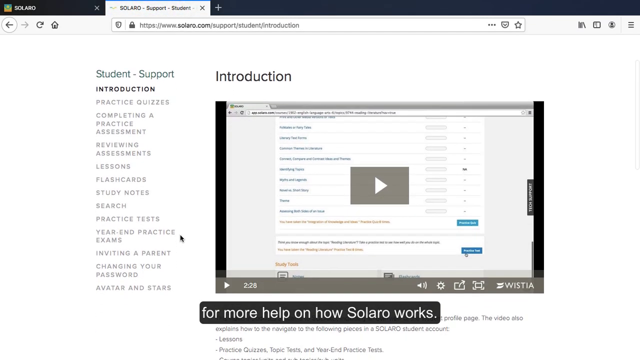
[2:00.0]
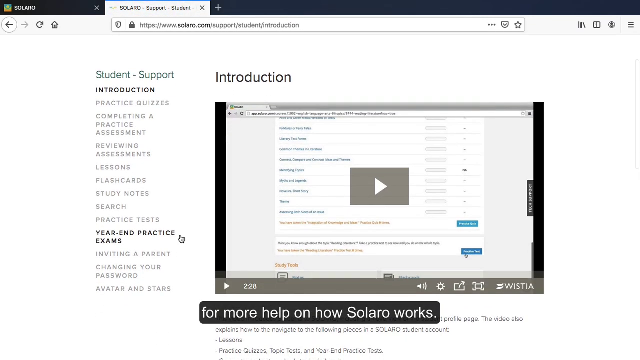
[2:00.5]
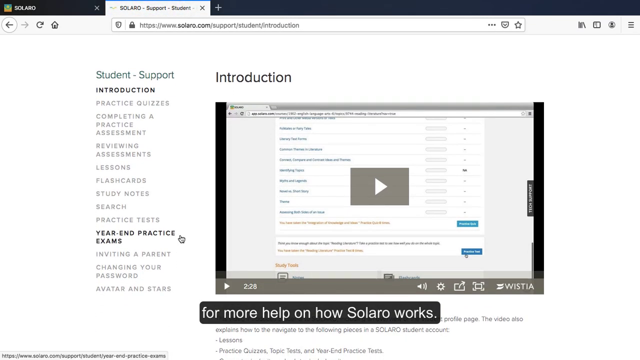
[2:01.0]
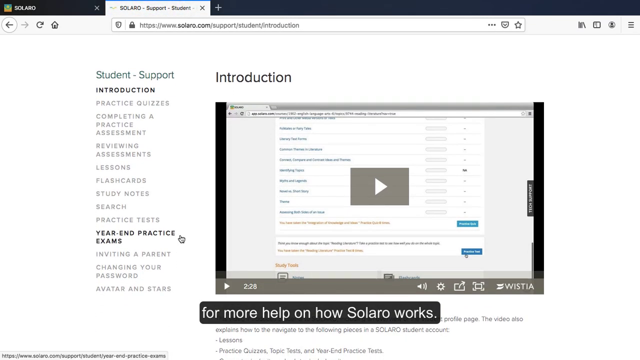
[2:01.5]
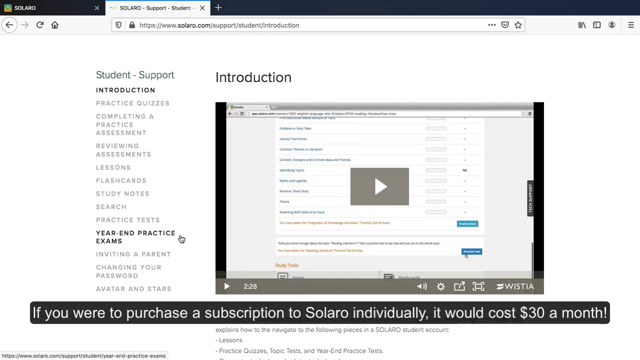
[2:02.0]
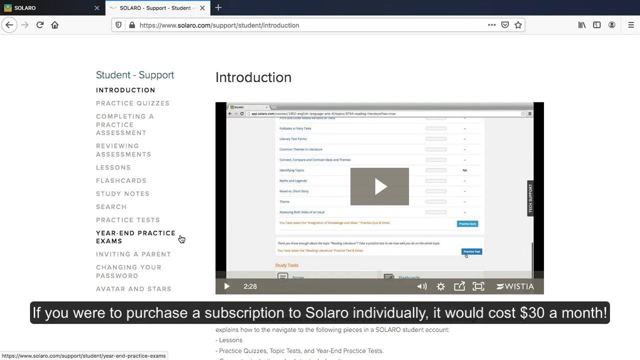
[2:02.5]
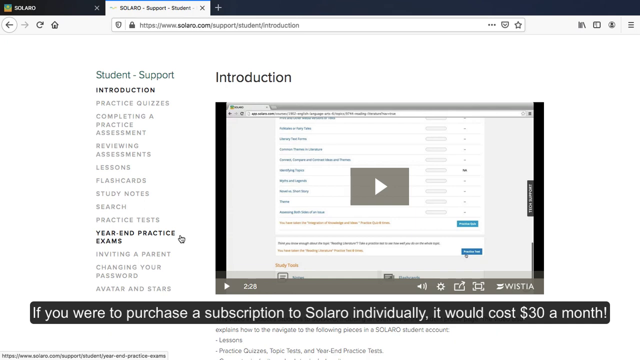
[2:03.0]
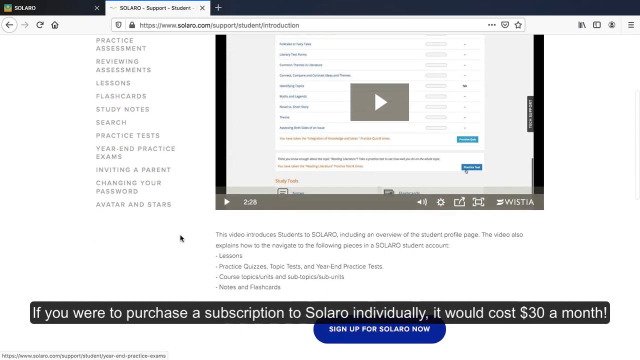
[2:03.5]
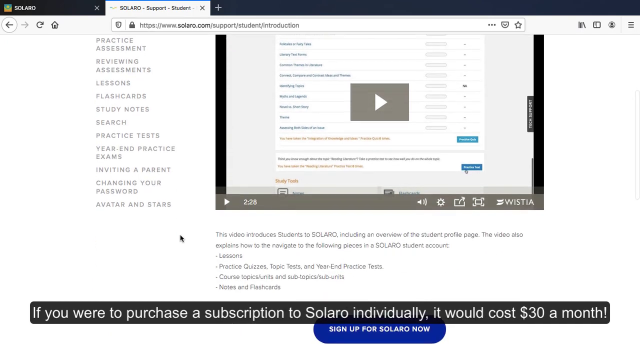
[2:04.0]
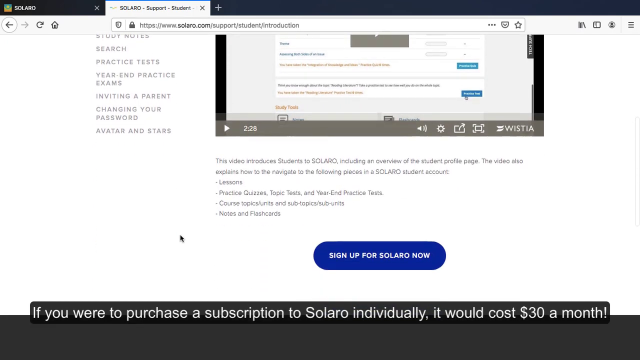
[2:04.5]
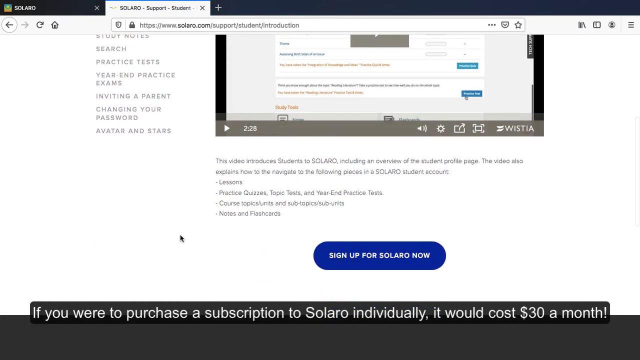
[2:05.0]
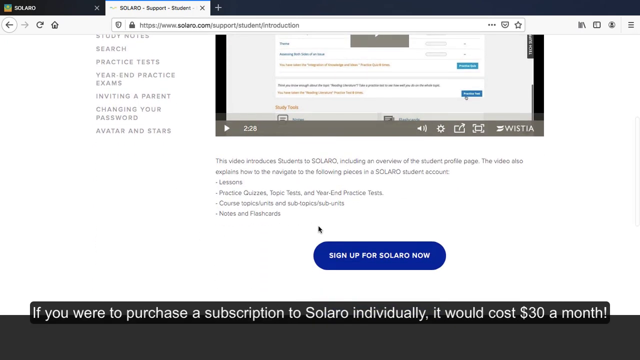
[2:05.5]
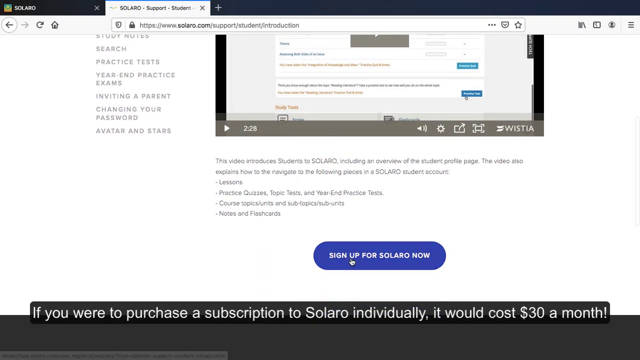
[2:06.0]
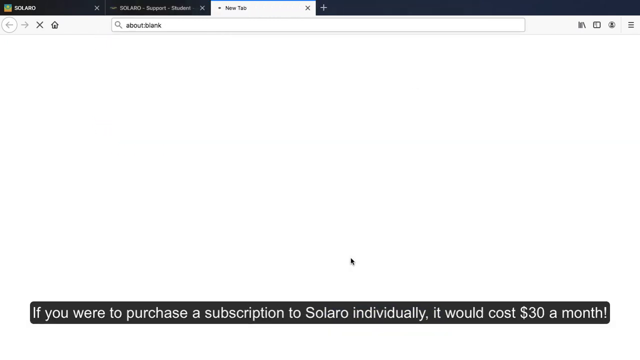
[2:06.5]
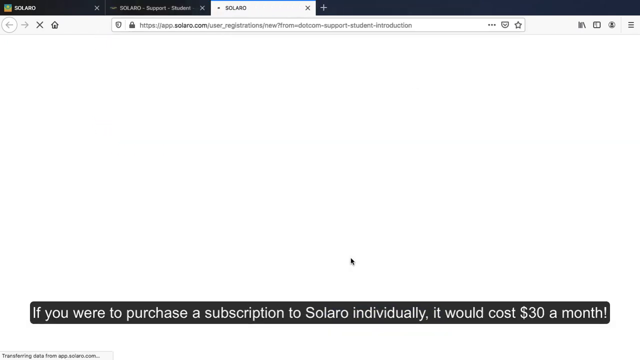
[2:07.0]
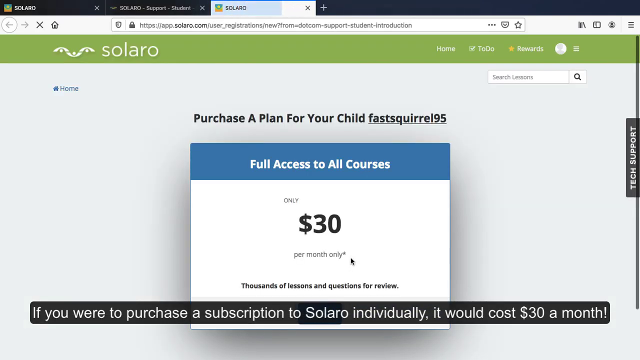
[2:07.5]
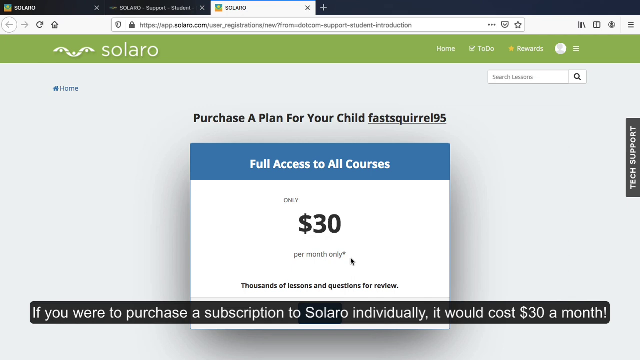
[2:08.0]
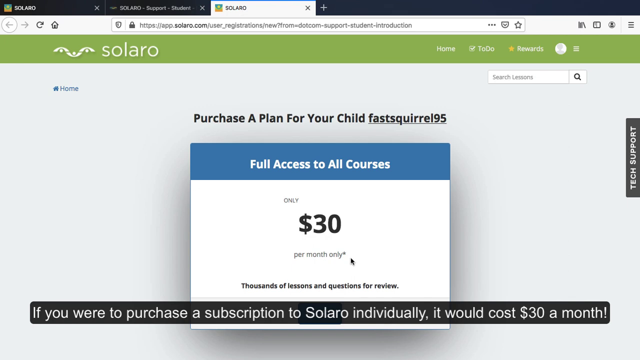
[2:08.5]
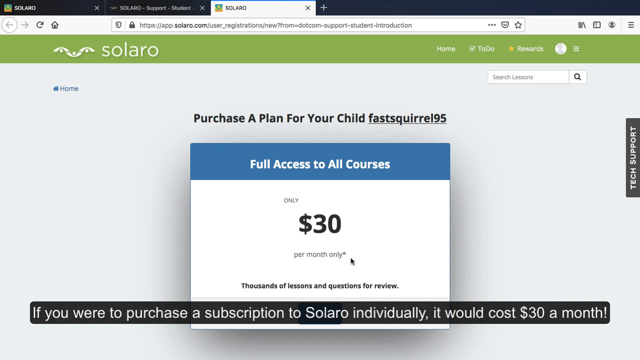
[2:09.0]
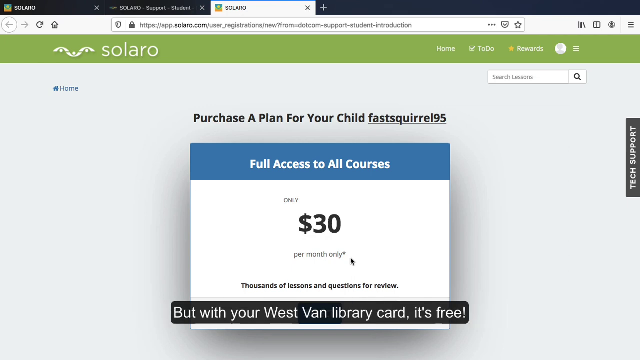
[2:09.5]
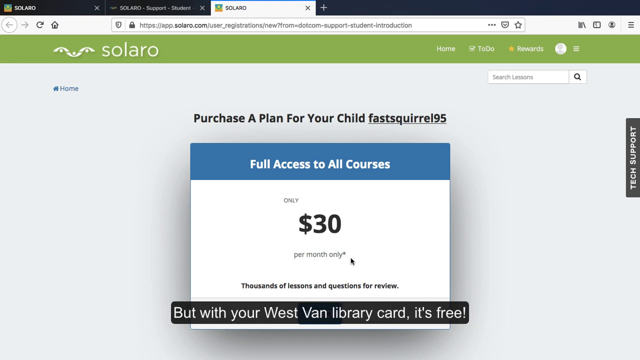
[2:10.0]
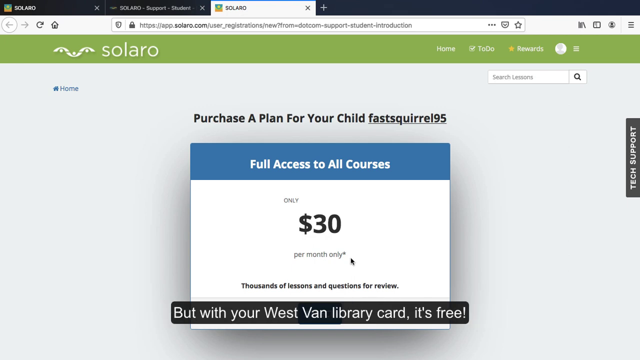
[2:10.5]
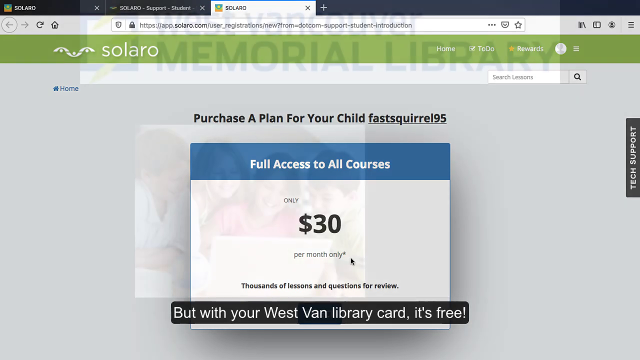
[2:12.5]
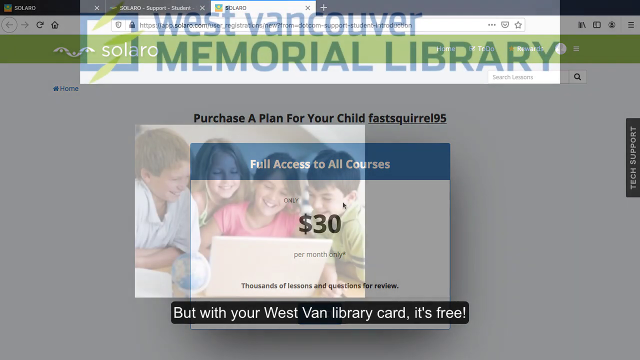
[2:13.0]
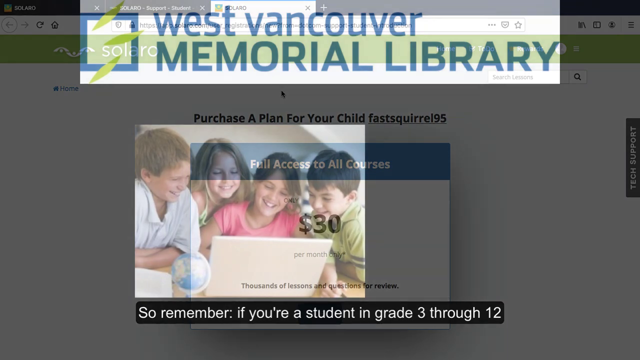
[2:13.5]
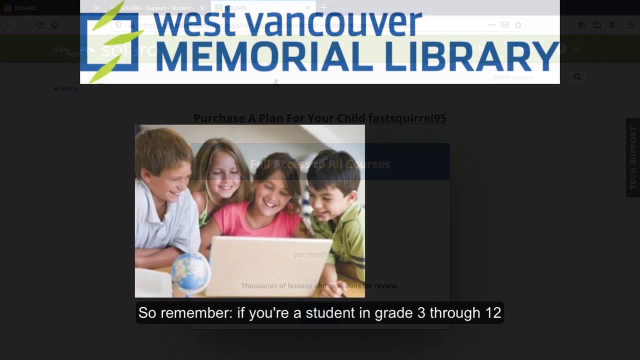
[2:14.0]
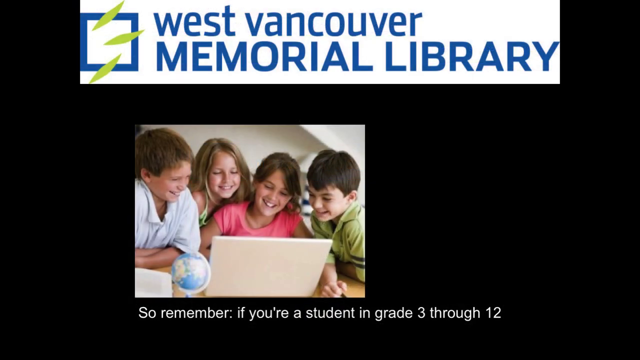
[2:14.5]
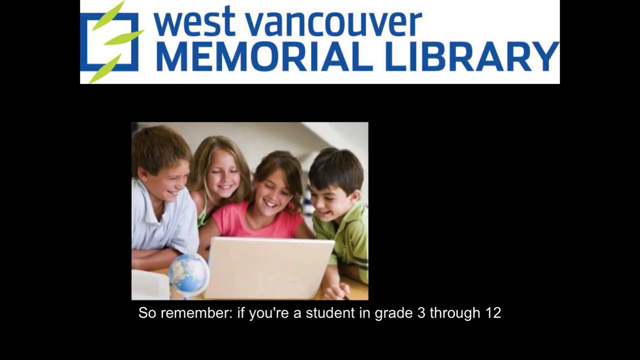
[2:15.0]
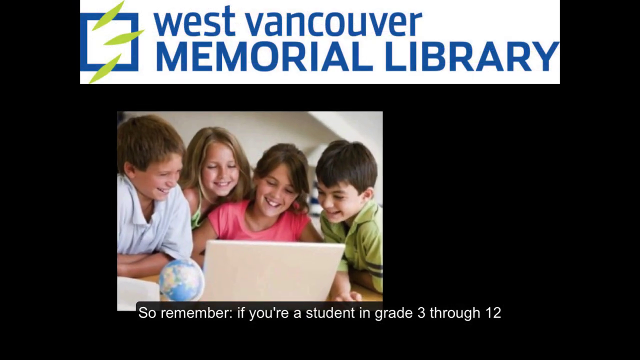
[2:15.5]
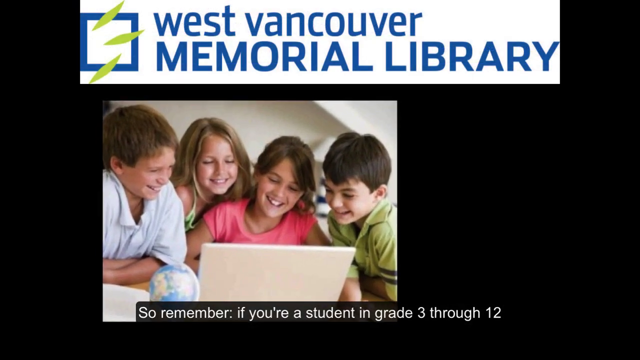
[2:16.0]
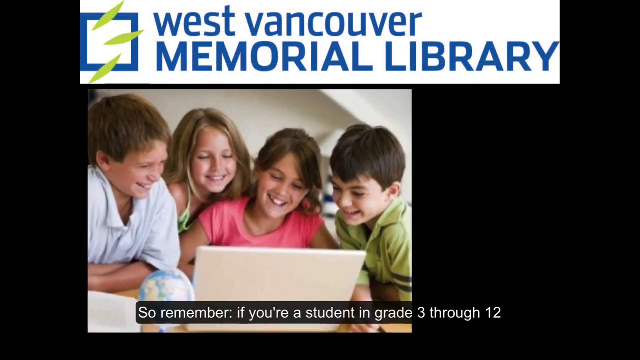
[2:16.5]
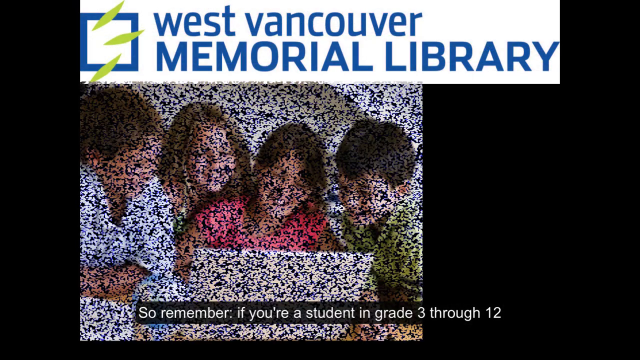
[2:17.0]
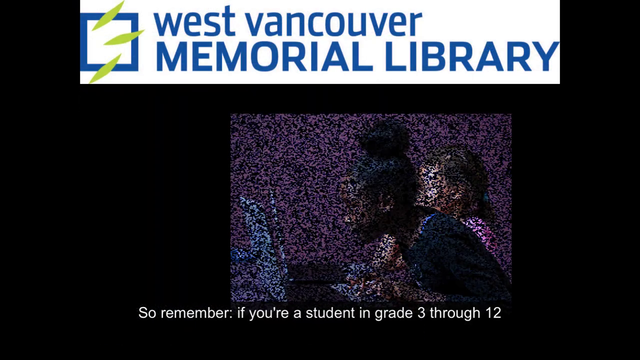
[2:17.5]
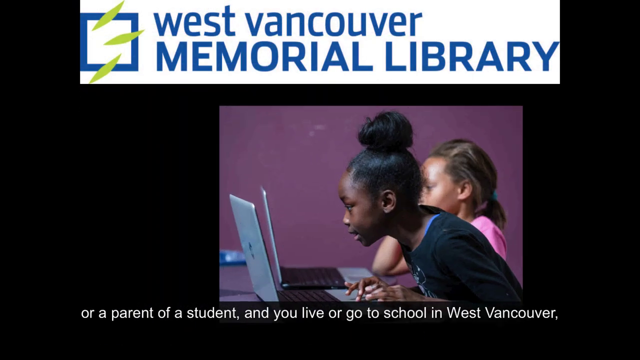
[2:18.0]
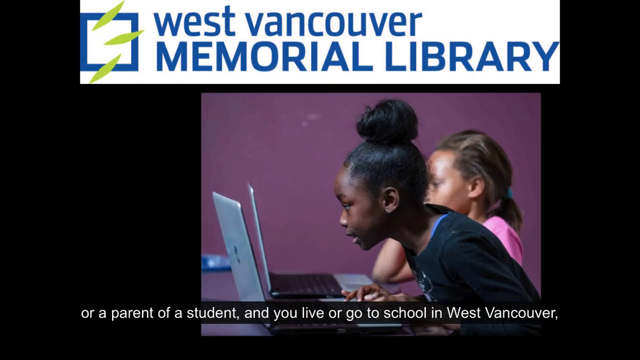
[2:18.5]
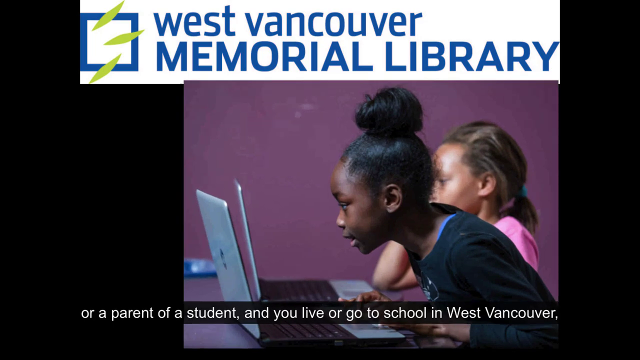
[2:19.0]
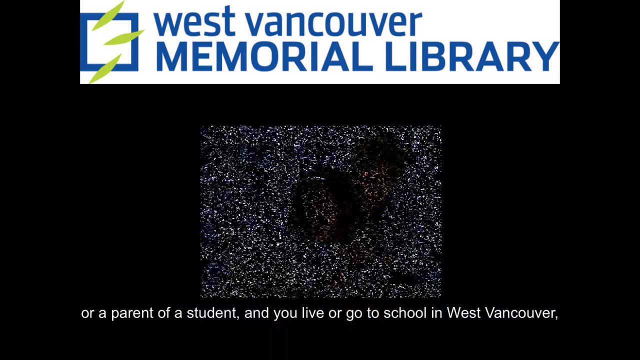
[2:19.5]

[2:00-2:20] The student support page has sidebar items including "introduction", "practice quizzes", "completing practice assessments", "reviewing assessments", "lessons", "flashcards", "study notes" and "practice tests". An introduction video appears with text saying "for more help on how Solero works". Text states that an individual Solero subscription would cost $30 a month. A "Sign up for Solero now" button is clicked, and the screen says "purchase a plan for your child's" and "Full access to all courses are $30." Then "West Vancouver Memorial Library" appears, along with a message that students in grade 3 through 12, or parents of students, who live or go to school in West Vancouver should visit this library. A few different subjects appear during these screen transitions.